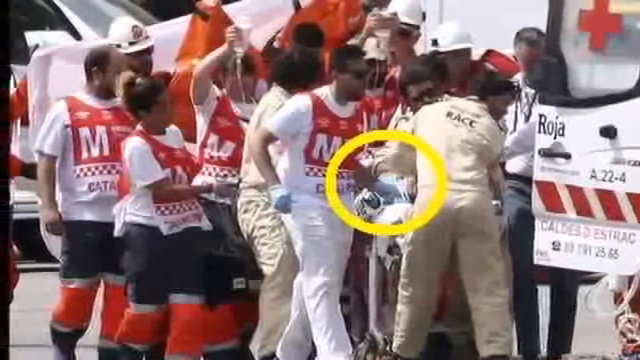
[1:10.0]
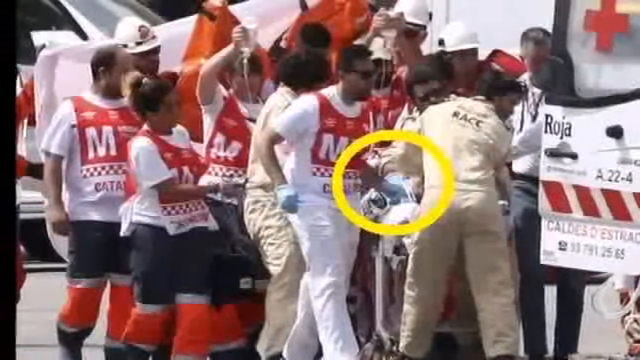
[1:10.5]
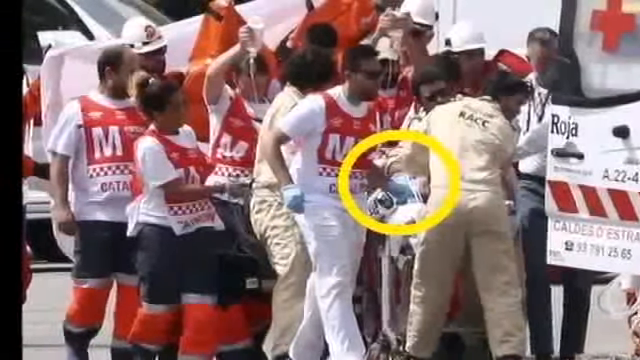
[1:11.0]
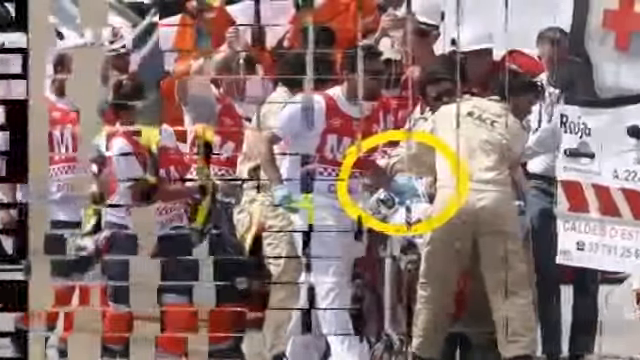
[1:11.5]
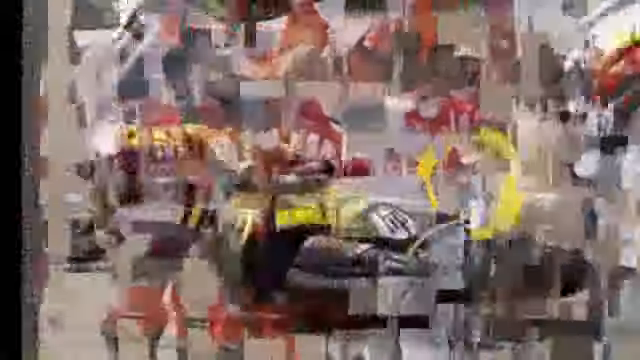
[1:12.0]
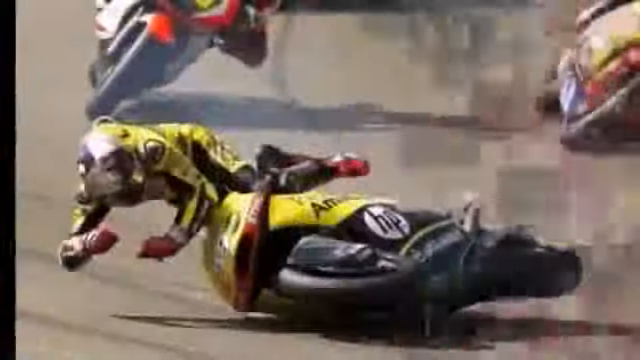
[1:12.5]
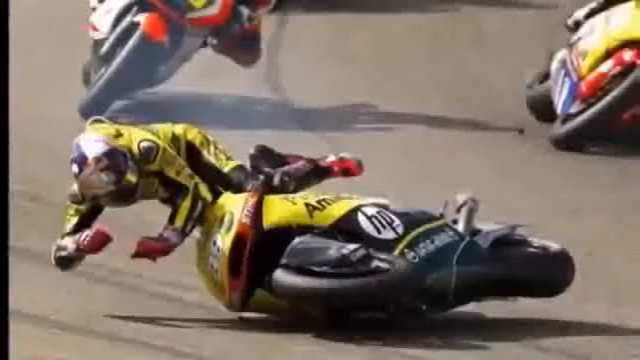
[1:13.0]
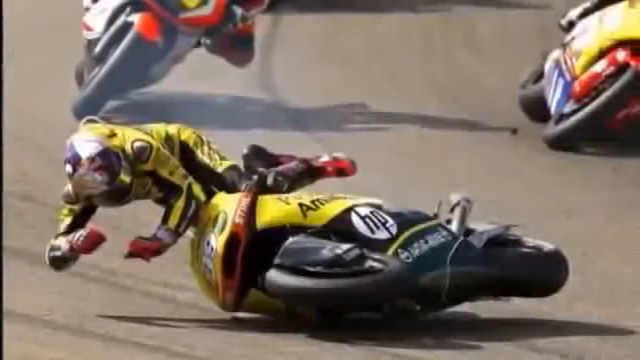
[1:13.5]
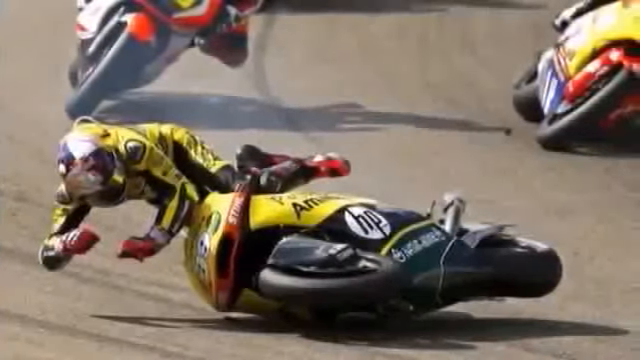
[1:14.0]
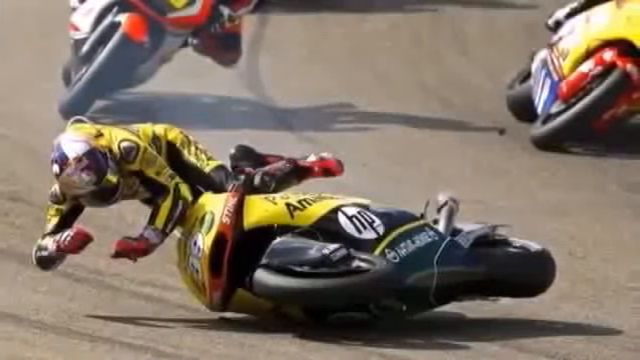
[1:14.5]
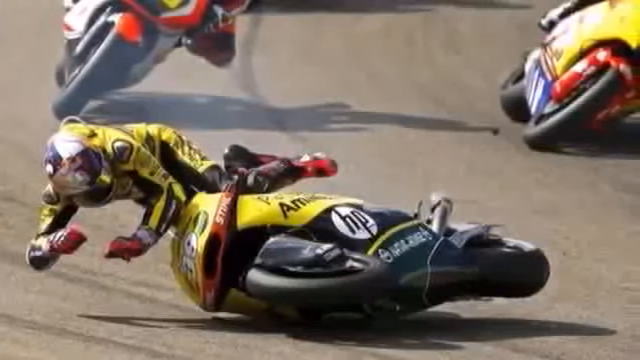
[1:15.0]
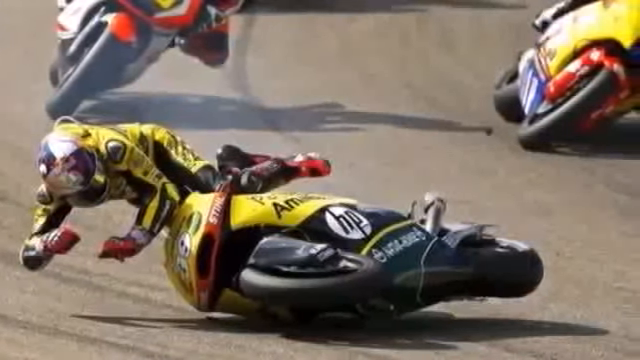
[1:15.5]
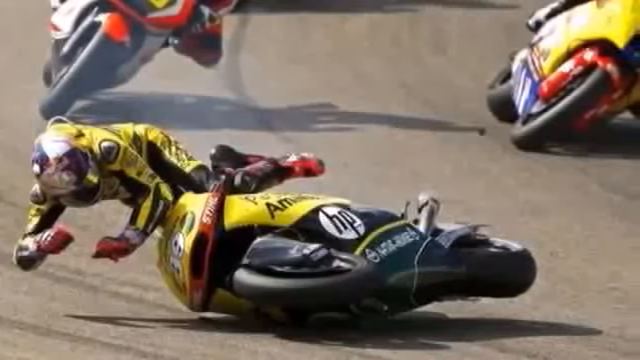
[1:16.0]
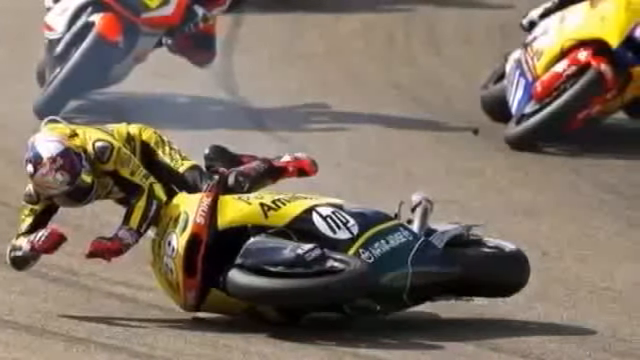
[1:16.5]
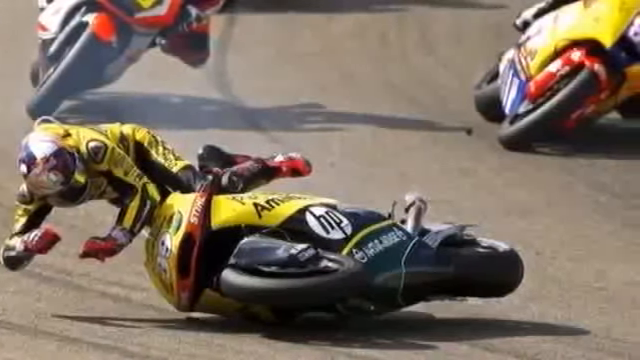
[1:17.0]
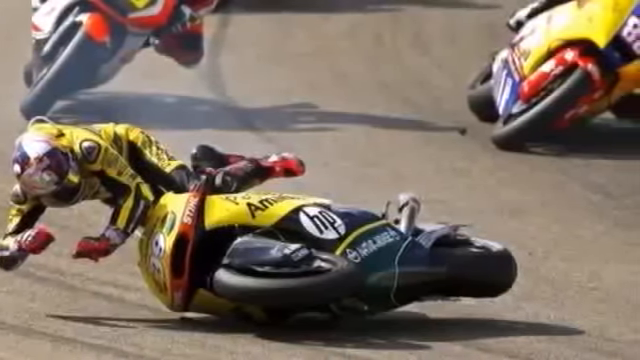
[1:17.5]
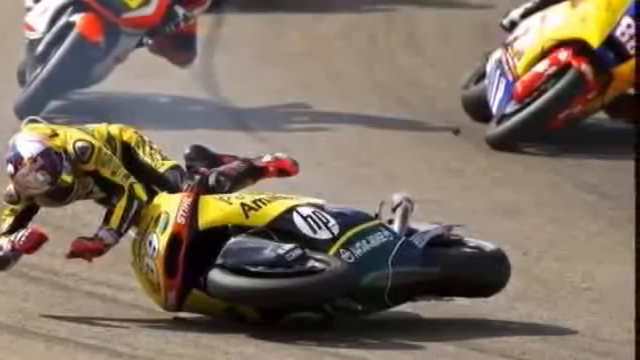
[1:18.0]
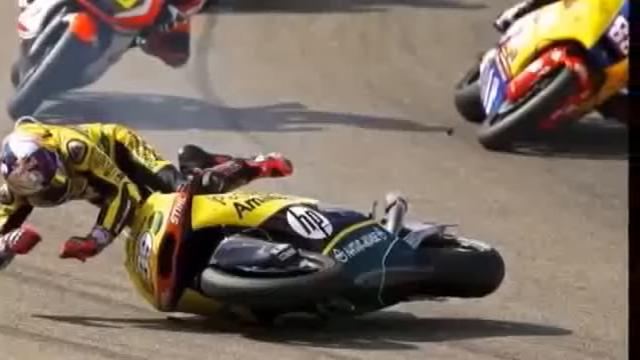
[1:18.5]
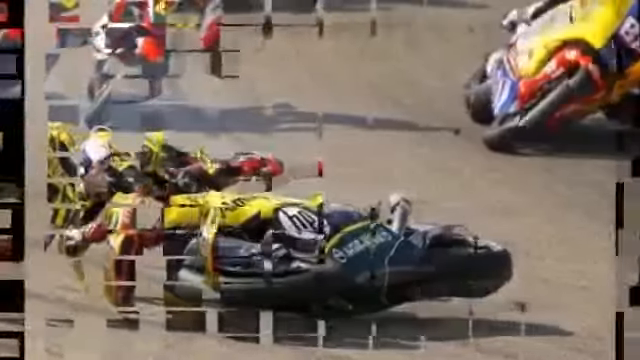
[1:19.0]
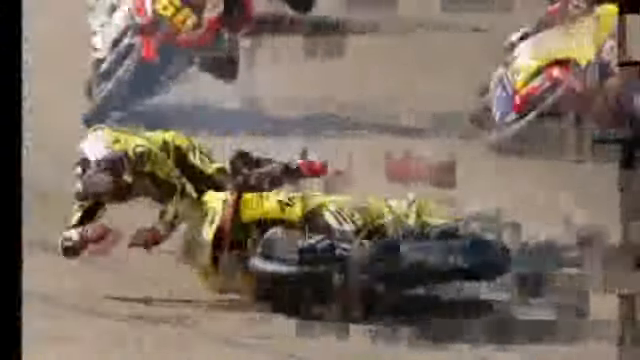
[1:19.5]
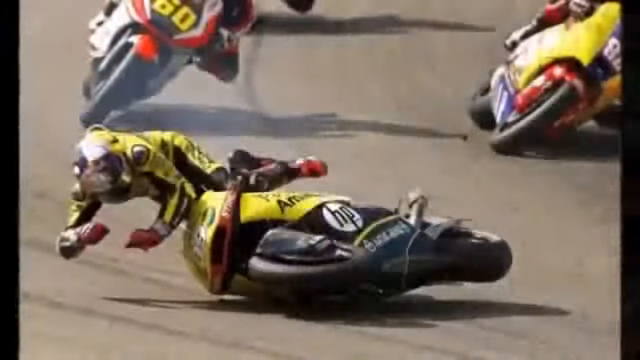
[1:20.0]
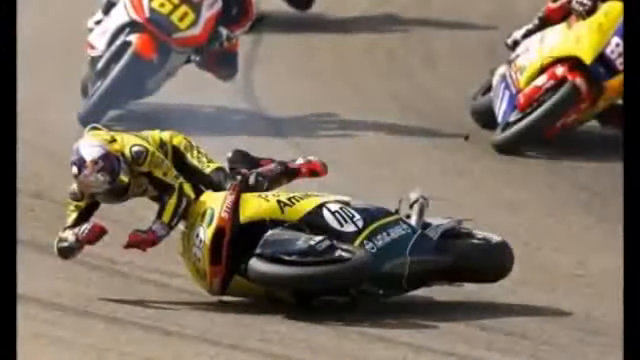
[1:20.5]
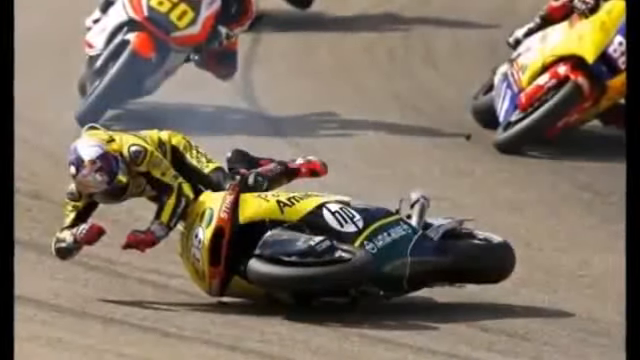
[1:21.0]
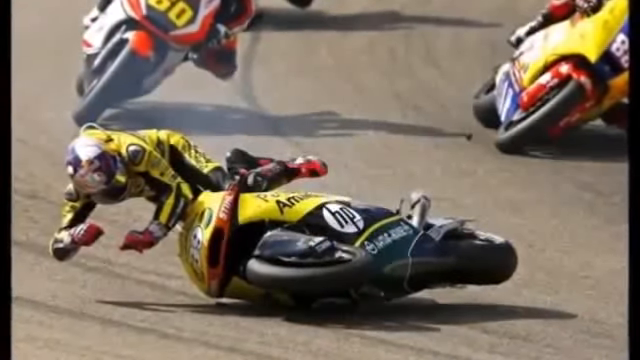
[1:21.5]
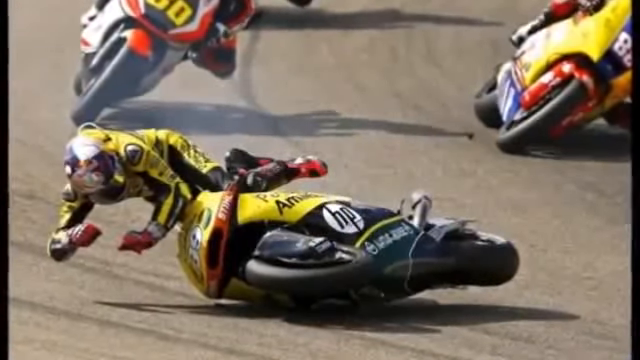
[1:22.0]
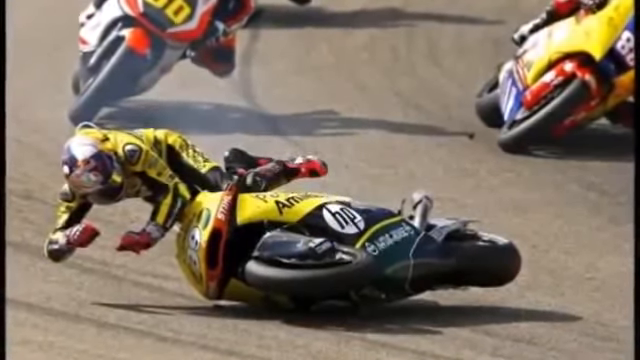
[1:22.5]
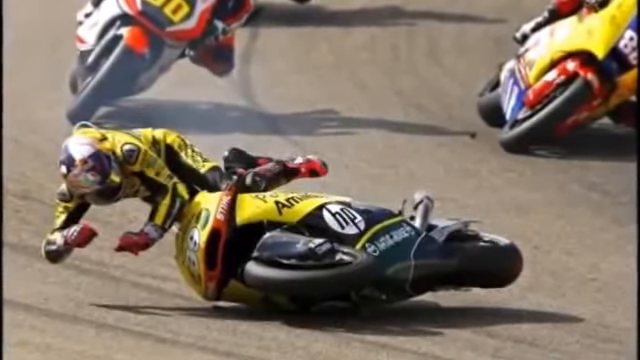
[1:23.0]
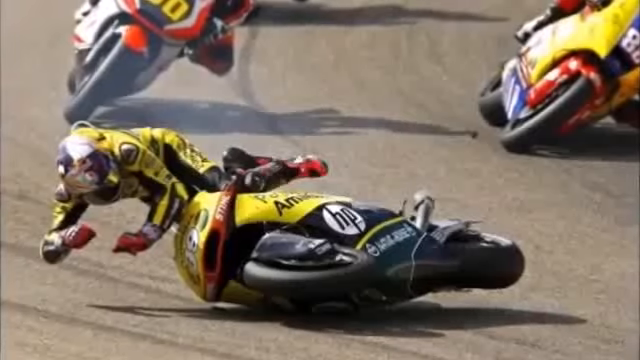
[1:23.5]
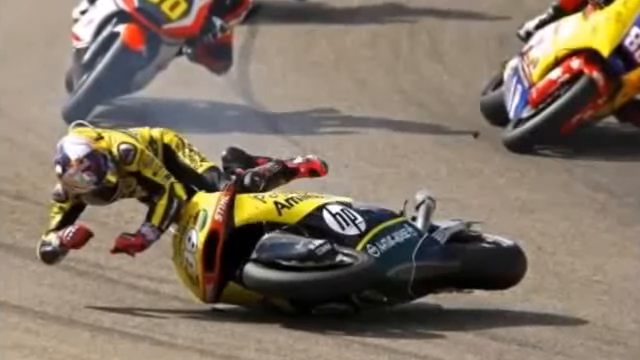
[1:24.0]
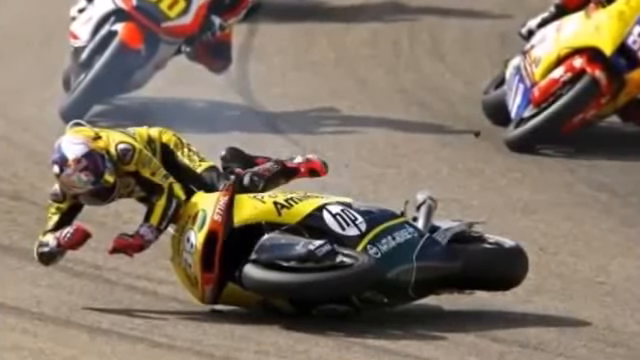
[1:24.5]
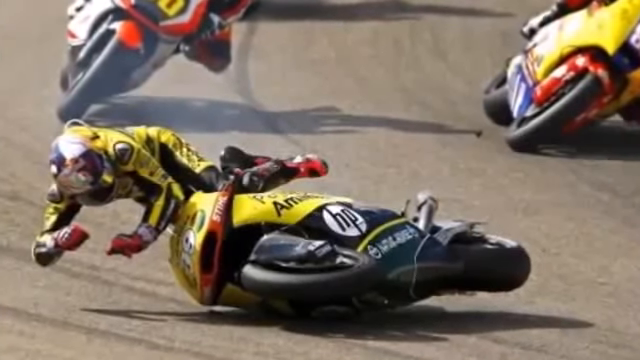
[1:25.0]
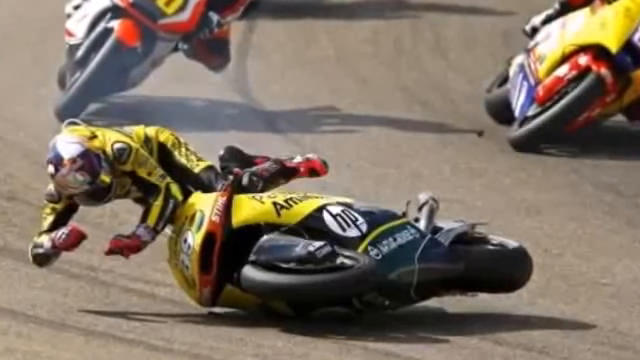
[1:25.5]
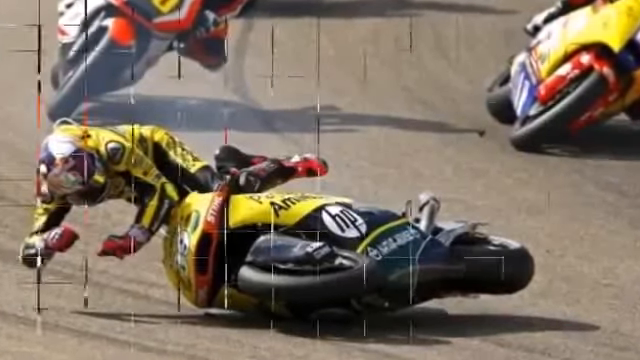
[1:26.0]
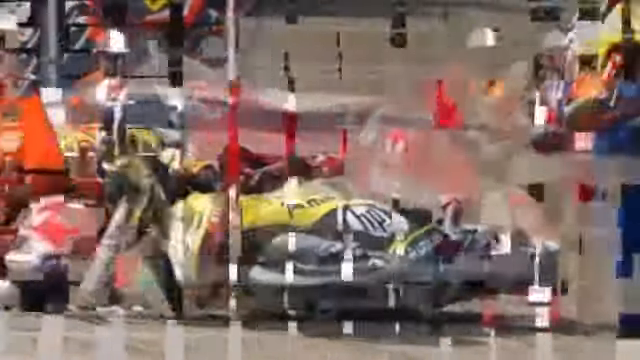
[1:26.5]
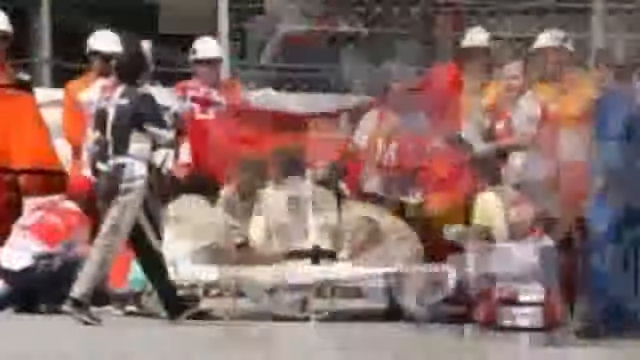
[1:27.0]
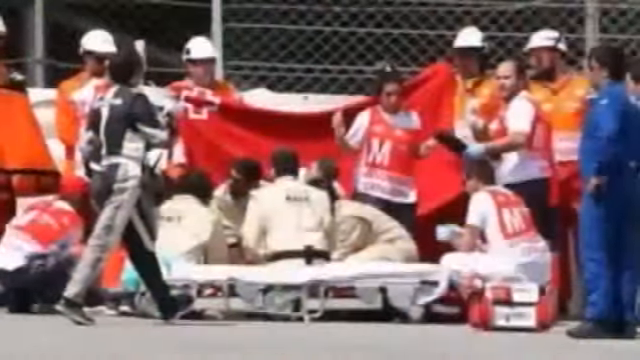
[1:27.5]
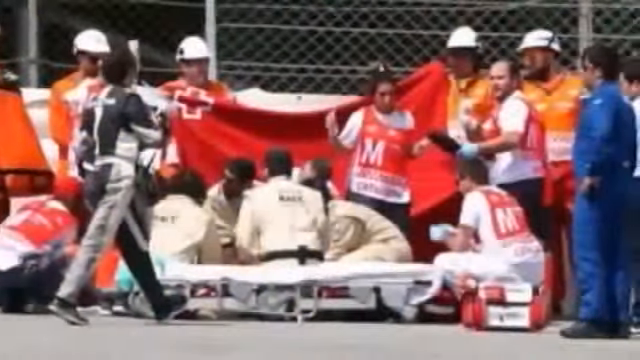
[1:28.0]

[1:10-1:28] A quick checkerboard cut leads to the still image of the motorbike rider falling onto the pavement during the race. The motorbike, with yellow and black trim, is turned over on its side. The rider wears red boots and red gloves and braces for impact as he falls, arms extended in front of his face. The camera pans the still image from left to right, showing in the background two other motorbike riders turned sort of sideways, apparently going past him, and a shadow is visible. A checkerboard cut returns to the same image, this time closing in on it rather than moving left to right. A final checkerboard cut shows what looks like the medical personnel arriving at the scene. The stretcher is on the ground, and in the background there is a red flag, apparently a Red Cross or ambulance flag. Workers in orange vests and hard hats are present, and people kneel on the ground, apparently attending to the injured person.